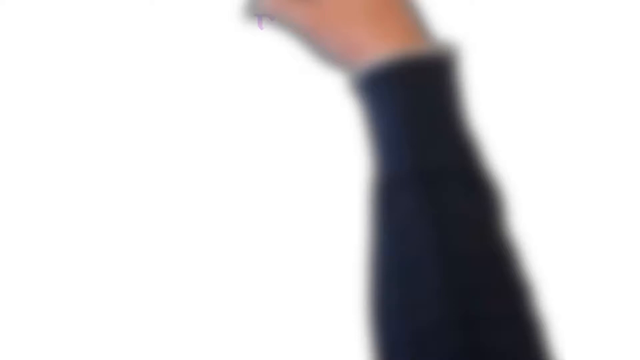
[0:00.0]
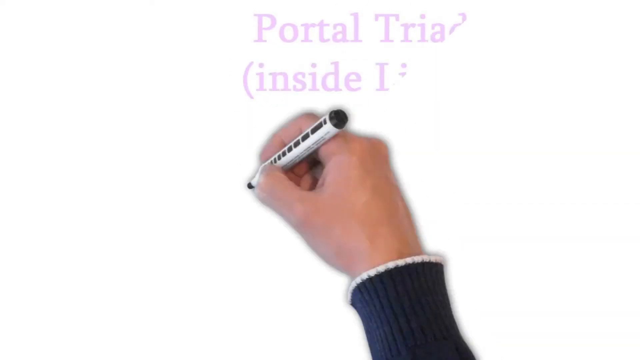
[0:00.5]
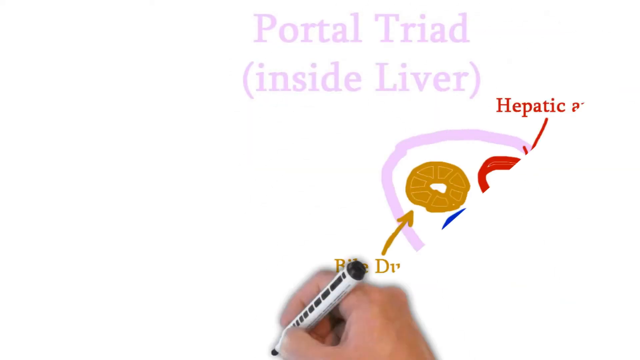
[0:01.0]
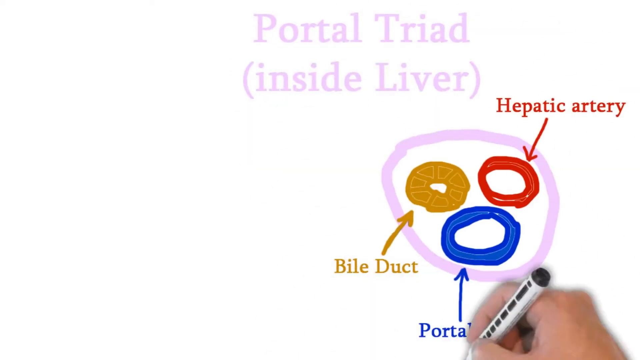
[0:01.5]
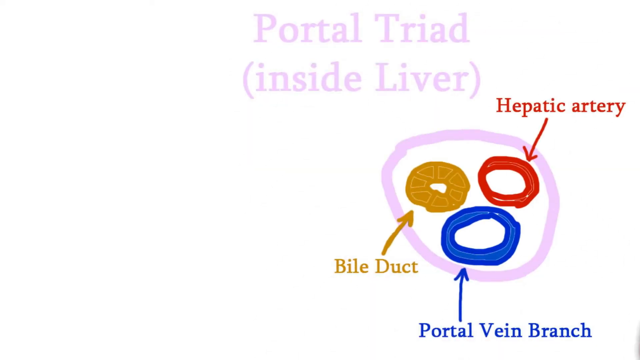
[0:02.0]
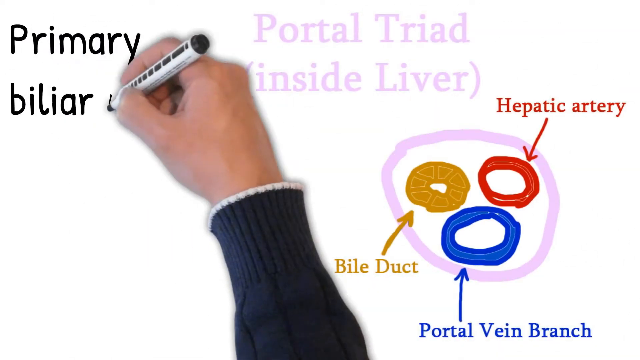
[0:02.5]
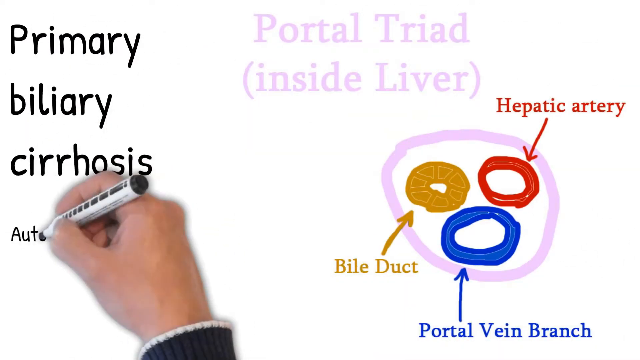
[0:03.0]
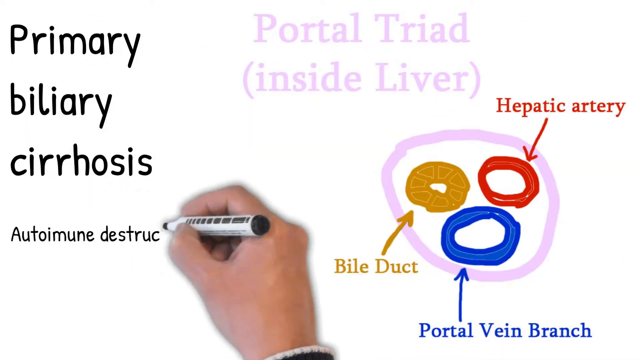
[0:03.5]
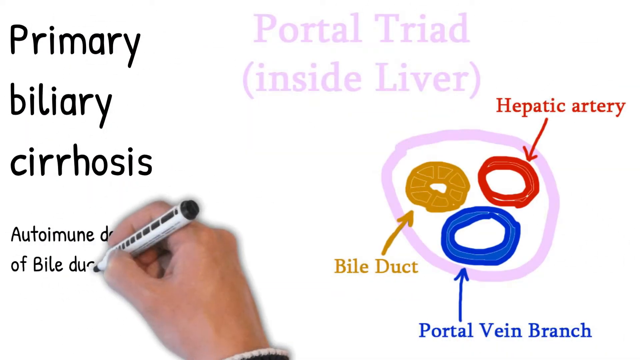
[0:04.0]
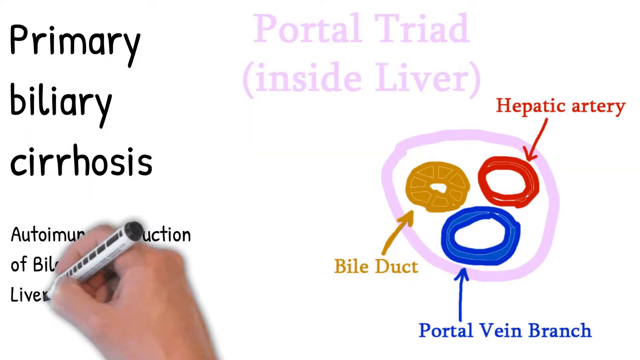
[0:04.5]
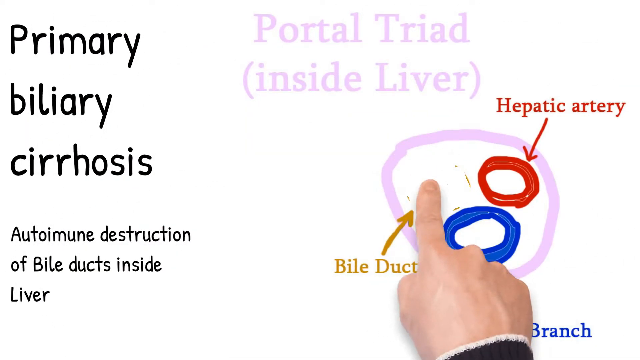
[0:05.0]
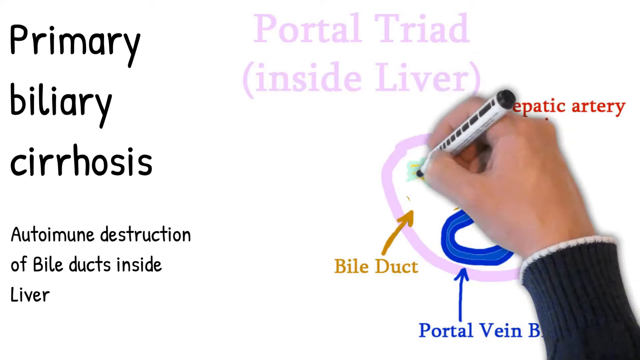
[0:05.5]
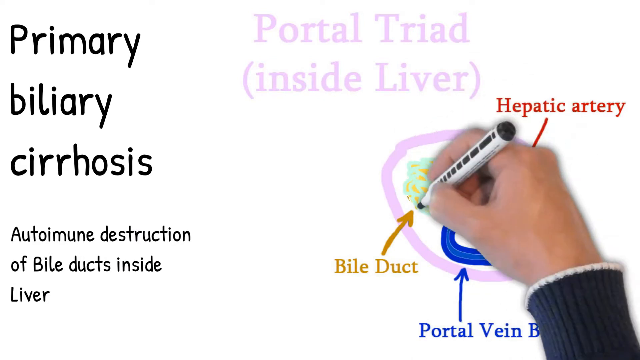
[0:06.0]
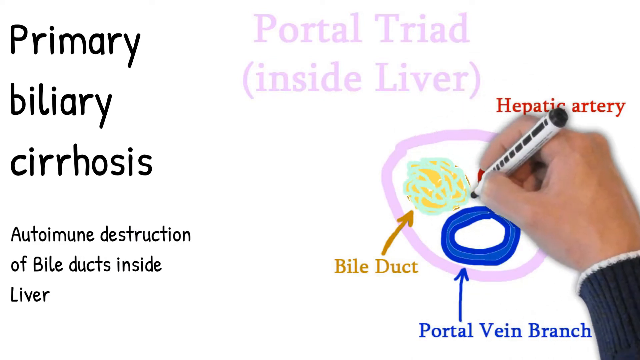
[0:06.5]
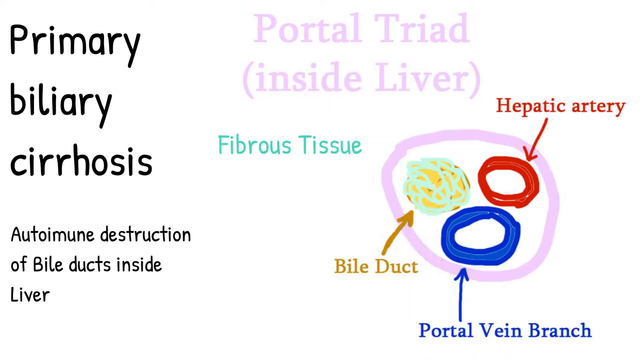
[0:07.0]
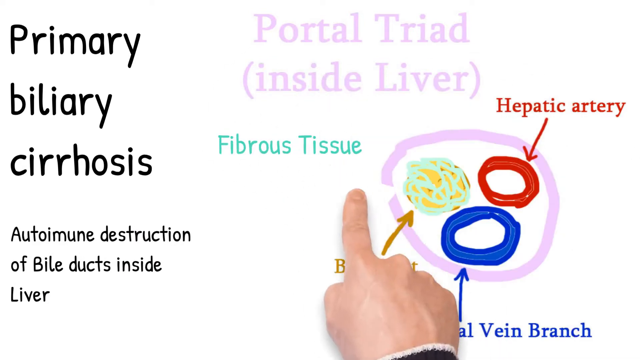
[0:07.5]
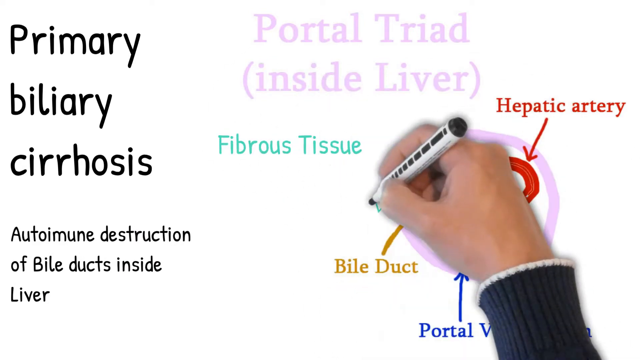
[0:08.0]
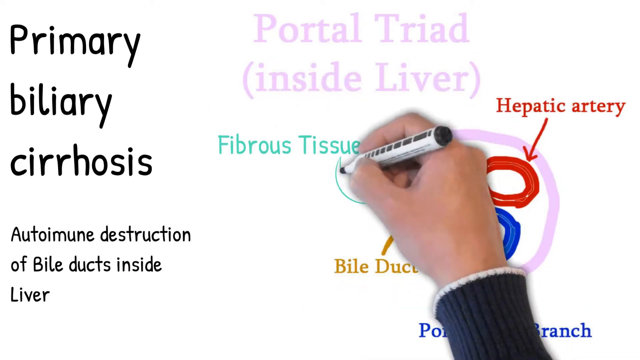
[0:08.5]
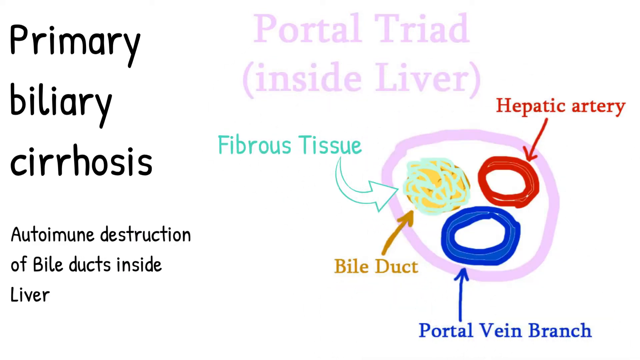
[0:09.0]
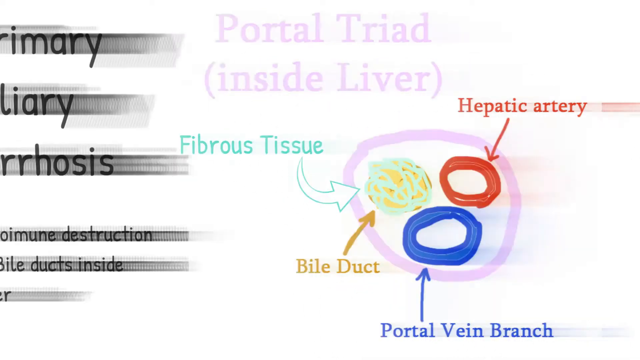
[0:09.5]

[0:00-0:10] A Caucasian, right-handed male draws on a whiteboard. He wears a long-sleeved gray sweater with just a bit of white around the edge of the sleeve at the wrist. He uses a marker with white and black labeling, and although the marker stays the same, it draws in different colors on the whiteboard. The whiteboard has writing in various colors. At the top center, purple writing reads "portal triad (inside liver)". Beneath it is a purple-lavender circle with three circles inside: at the top left is a mustard yellow circle labeled "bile duct" with an arrow pointing to it; to its right is a red circle labeled "hepatic artery" with an arrow pointing to it; and at the bottom is a blue circle with blue writing, "portal vein branch", with an arrow pointing upward to it. On the left of the image, black text reads "primary biliary cirrhosis, autoimmune destruction of bile ducts inside the liver".